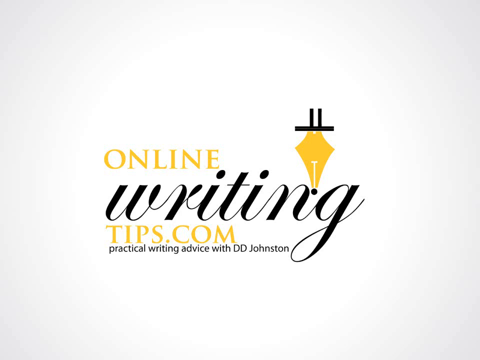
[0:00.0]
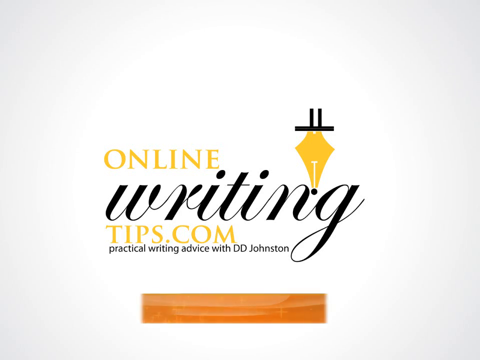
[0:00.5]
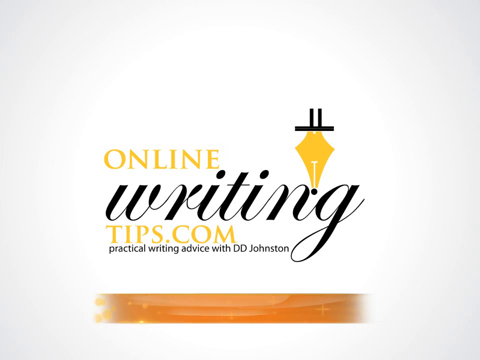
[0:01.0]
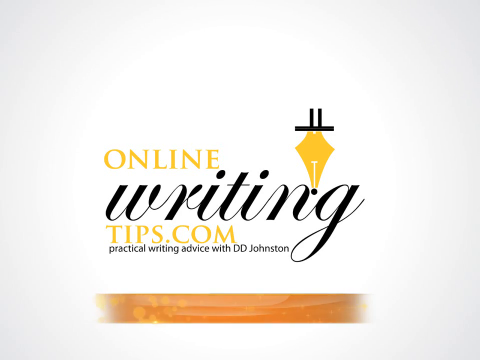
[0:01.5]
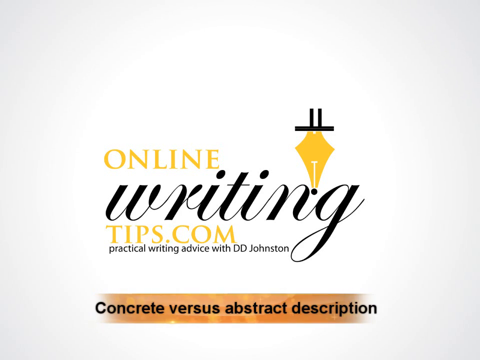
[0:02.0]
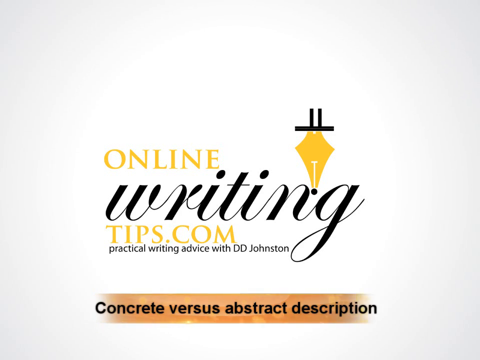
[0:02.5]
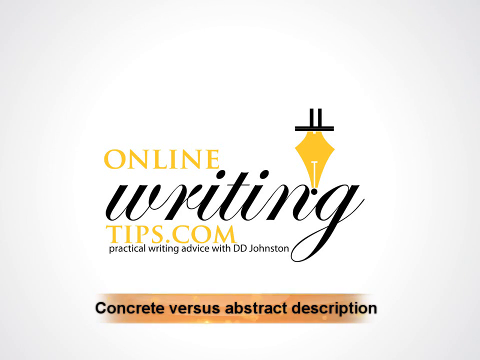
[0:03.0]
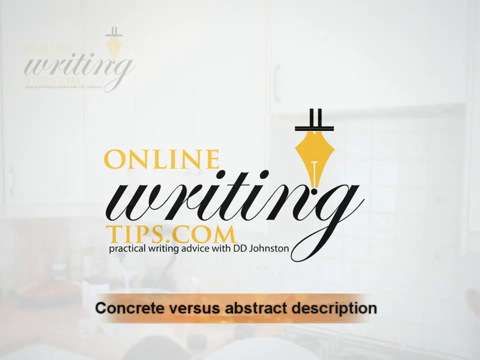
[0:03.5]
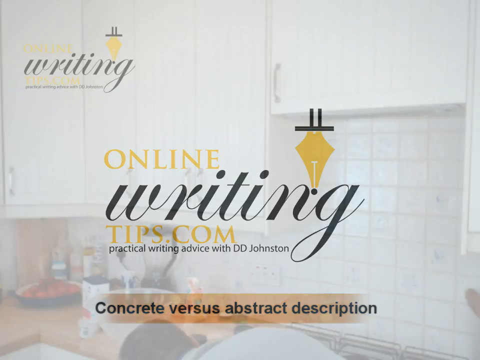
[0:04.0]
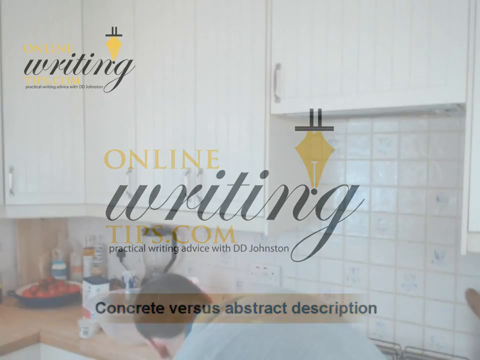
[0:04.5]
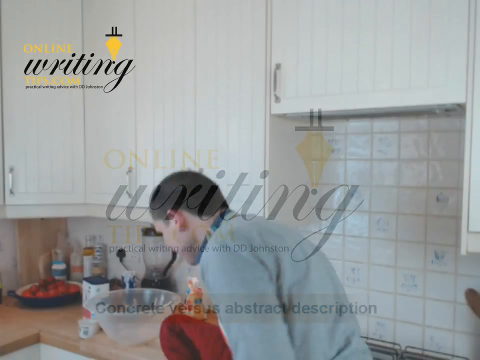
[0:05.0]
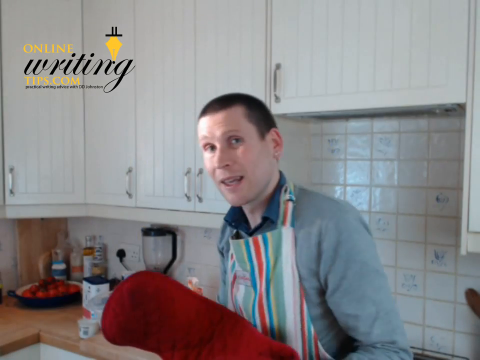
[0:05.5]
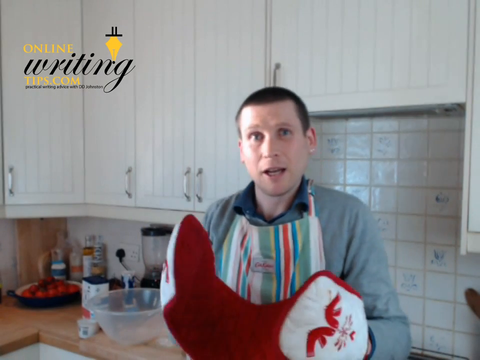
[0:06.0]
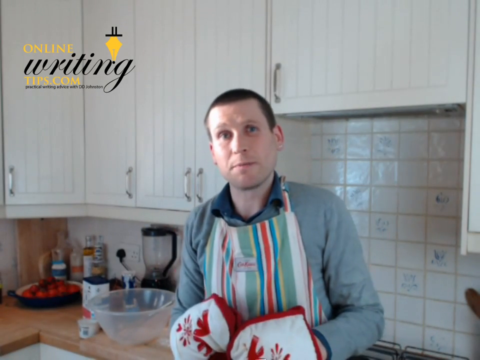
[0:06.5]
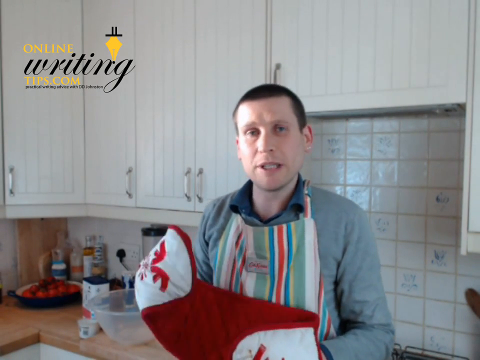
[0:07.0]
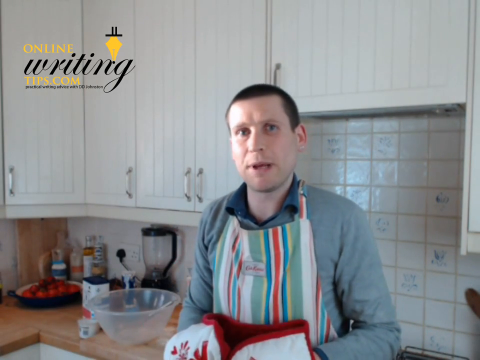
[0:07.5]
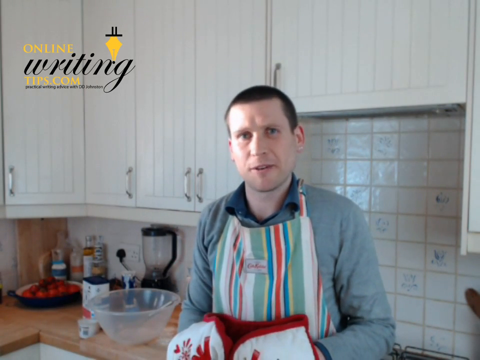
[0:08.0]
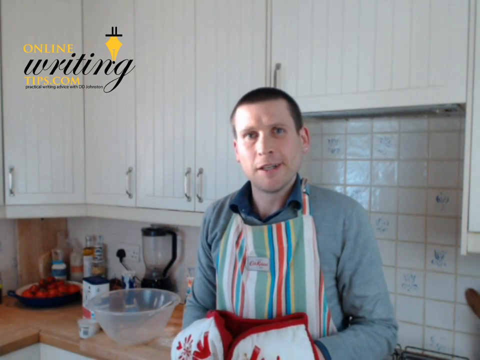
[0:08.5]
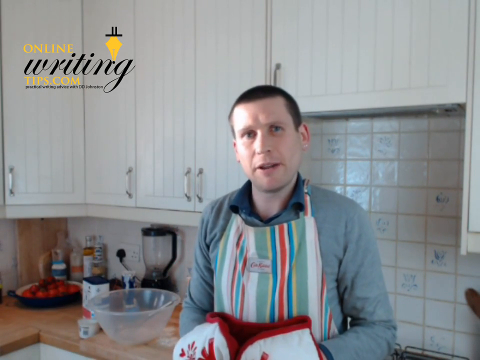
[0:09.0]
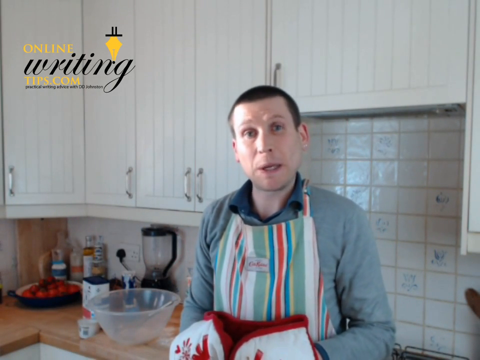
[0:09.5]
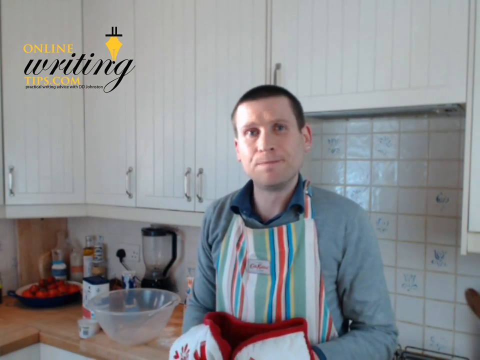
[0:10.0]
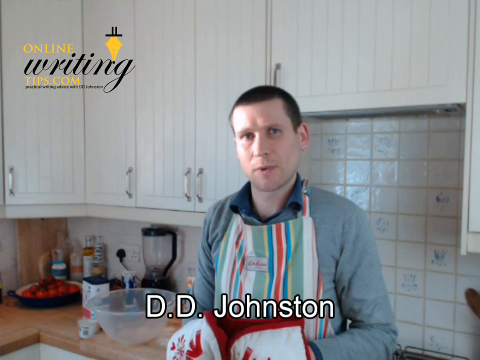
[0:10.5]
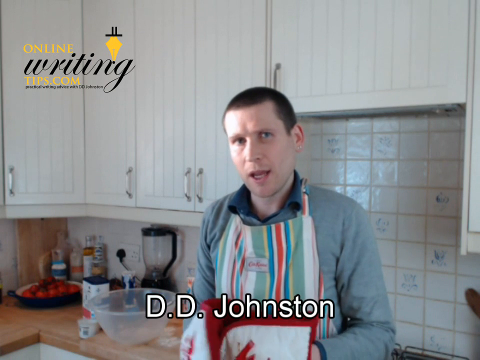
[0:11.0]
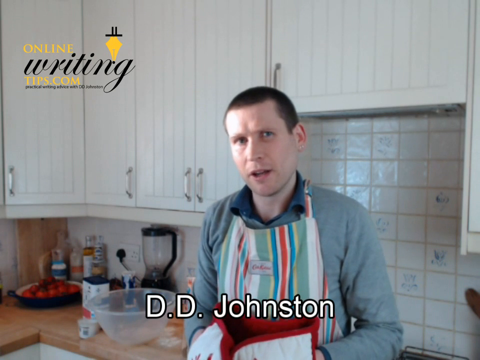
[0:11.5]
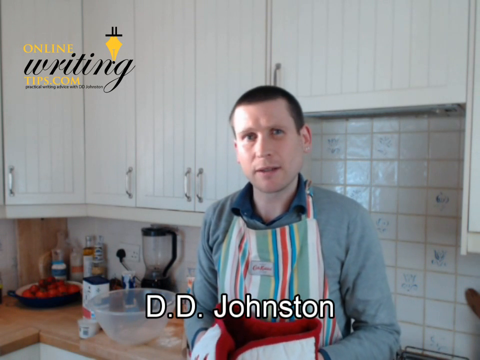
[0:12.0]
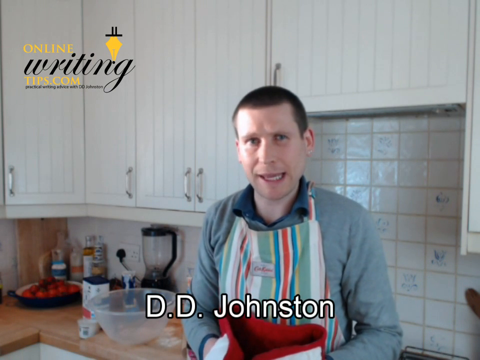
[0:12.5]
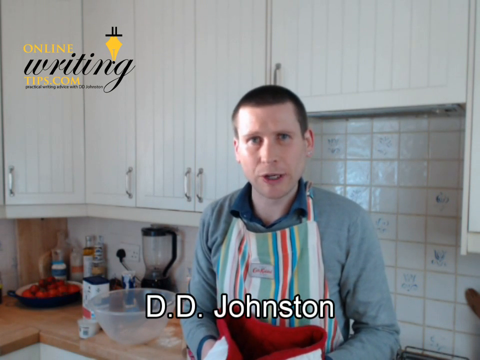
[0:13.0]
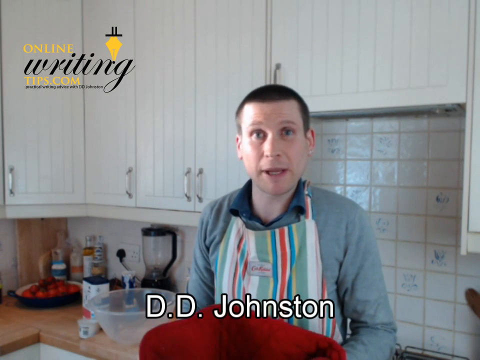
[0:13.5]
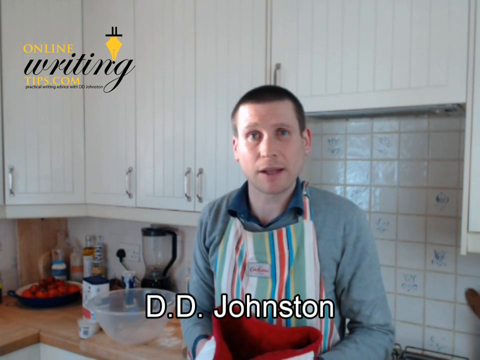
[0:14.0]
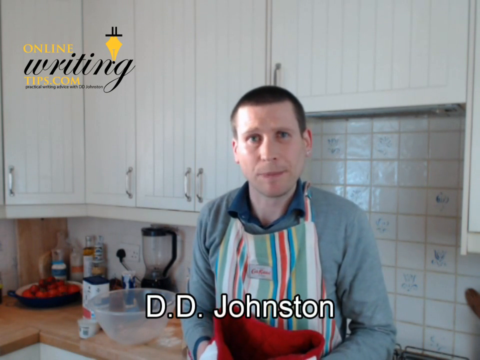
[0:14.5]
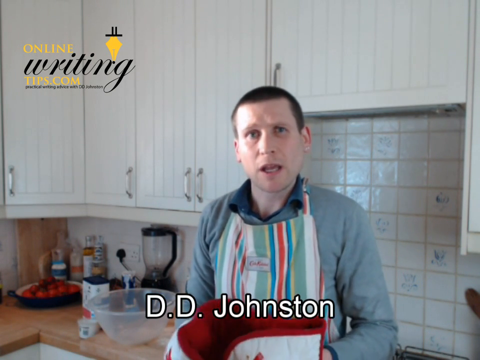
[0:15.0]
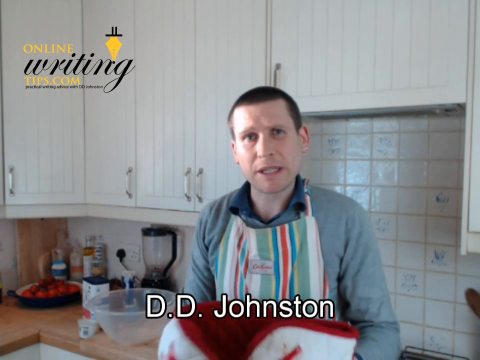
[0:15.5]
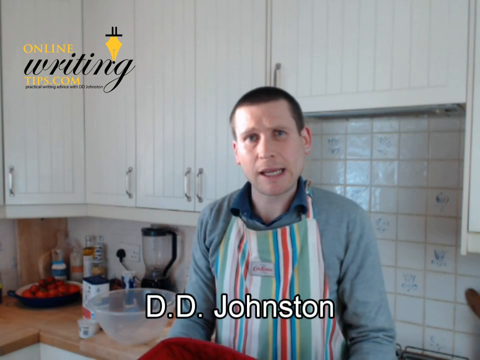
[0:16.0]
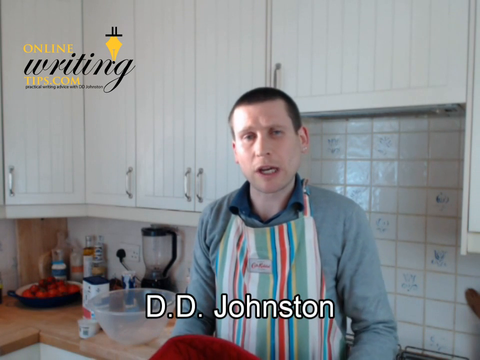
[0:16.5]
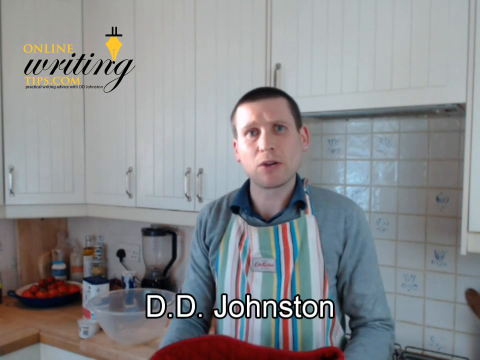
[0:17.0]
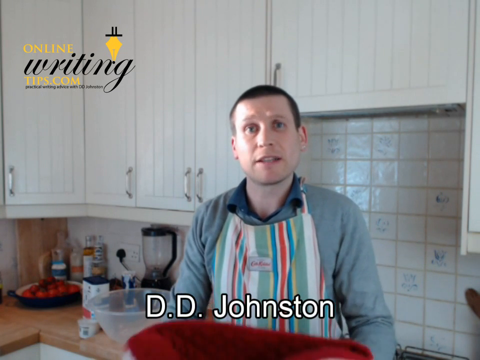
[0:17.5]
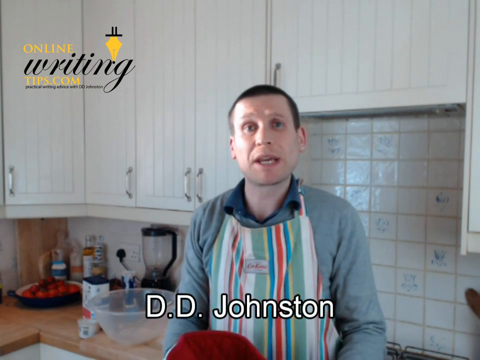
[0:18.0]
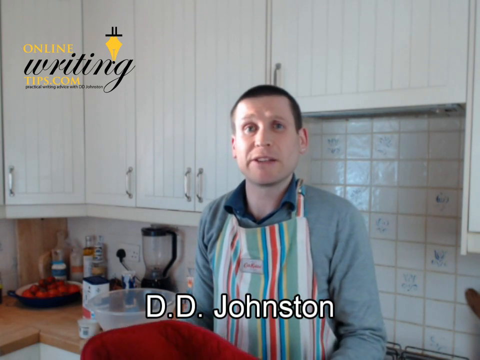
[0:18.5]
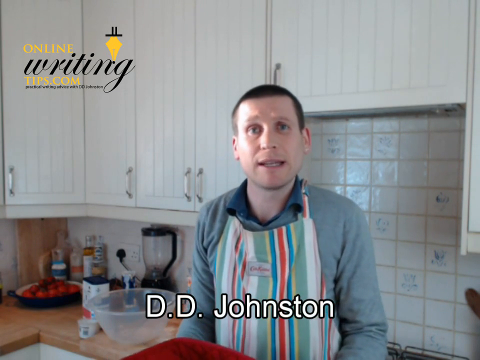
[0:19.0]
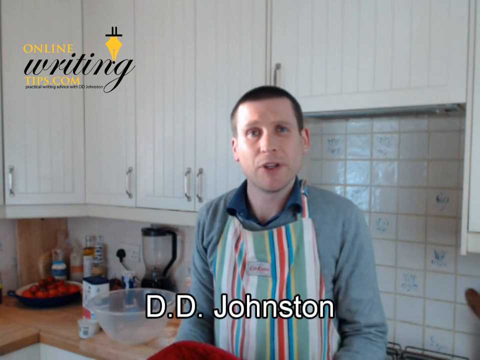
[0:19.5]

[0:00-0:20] The video opens with a logo on the screen reading "OnlineWritingTips.com". "Online" and "tips.com" are in yellow, while "Writing" is in black cursive. Underneath, in small letters, it says "Practical Writing Advice with D.D. Johnson". An image of an old-style pen is right above the word "Writing". The logo disappears and the scene turns to a man in a kitchen wearing a gray shirt, a striped apron and oven mitts on his hands, talking to the camera. The same logo is in the top left corner of the screen. He is standing in a kitchen with white walls and white cabinets with silver handles. Multiple kitchen appliances are behind him, along with a bowl of tomatoes and other typical kitchen things. The counters appear to be brown, and he moves his hands around as he talks to the camera.